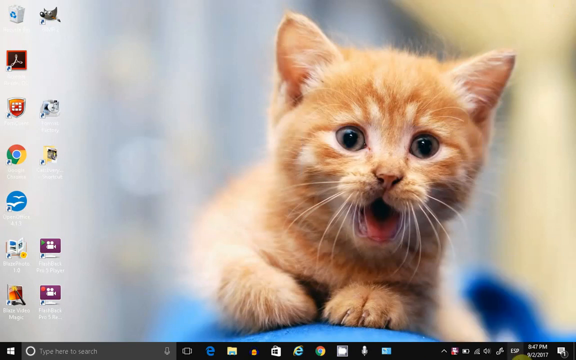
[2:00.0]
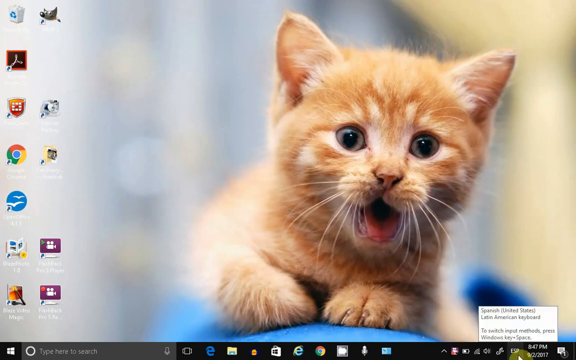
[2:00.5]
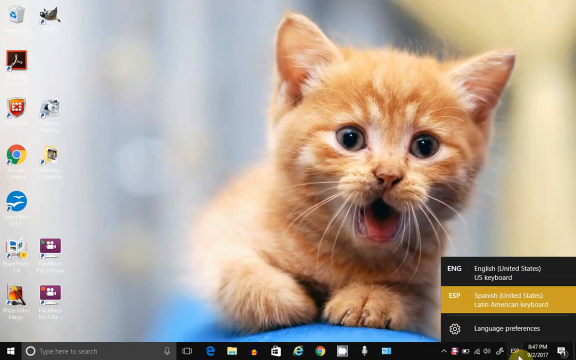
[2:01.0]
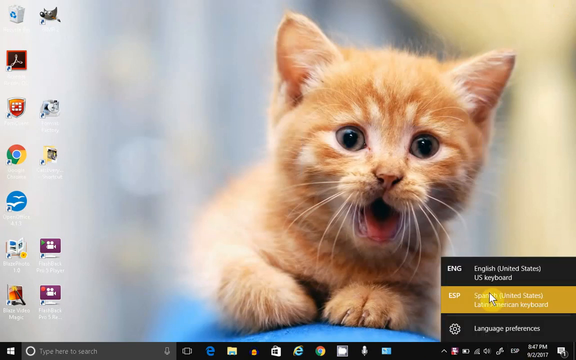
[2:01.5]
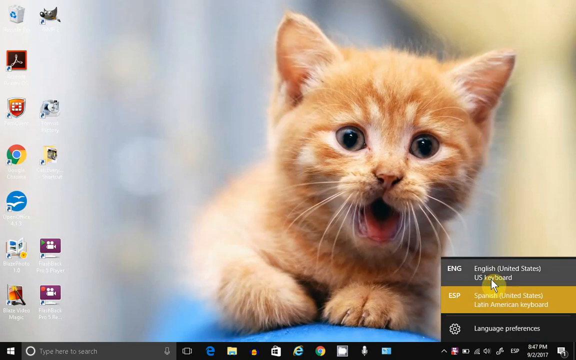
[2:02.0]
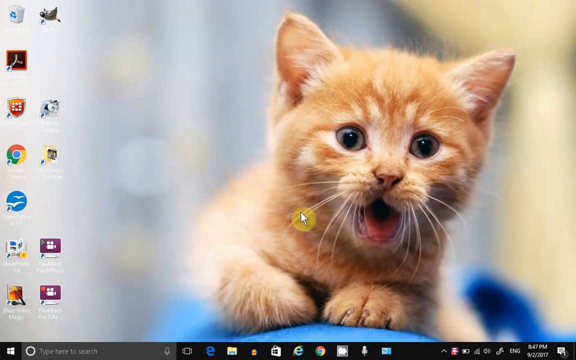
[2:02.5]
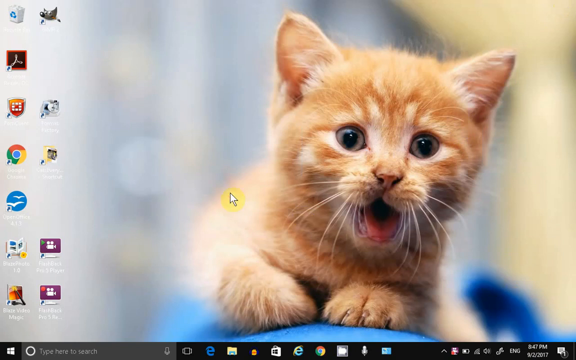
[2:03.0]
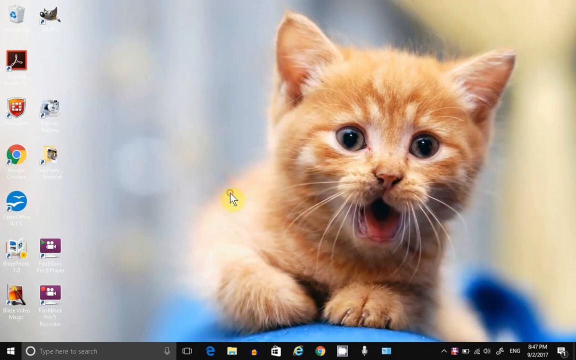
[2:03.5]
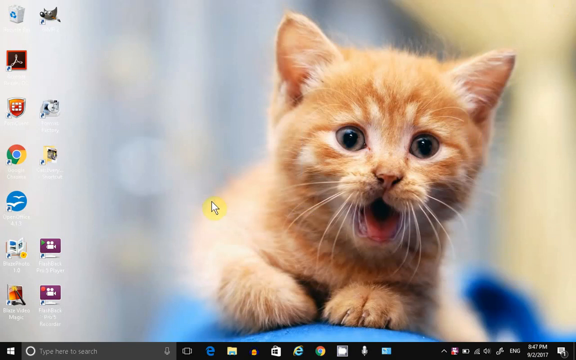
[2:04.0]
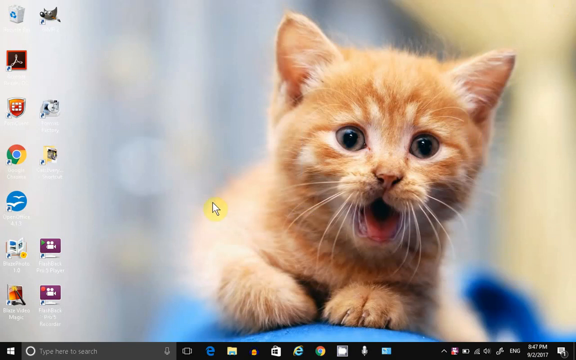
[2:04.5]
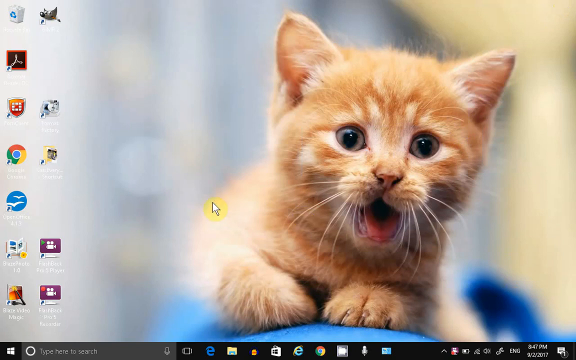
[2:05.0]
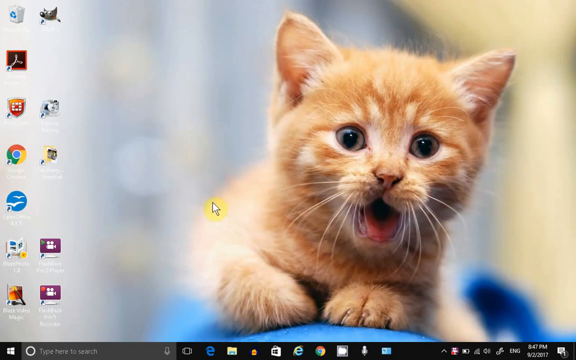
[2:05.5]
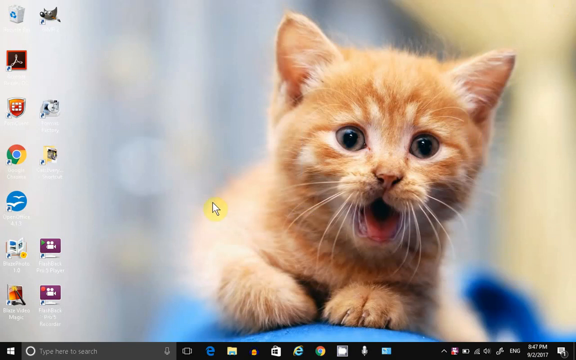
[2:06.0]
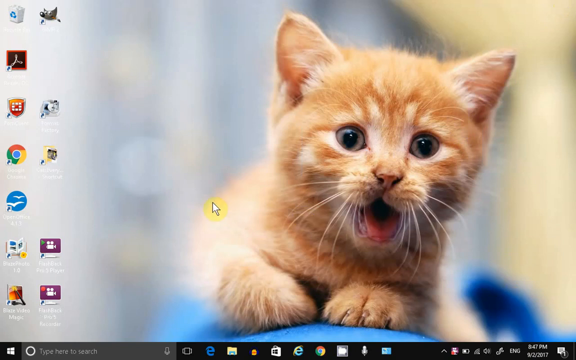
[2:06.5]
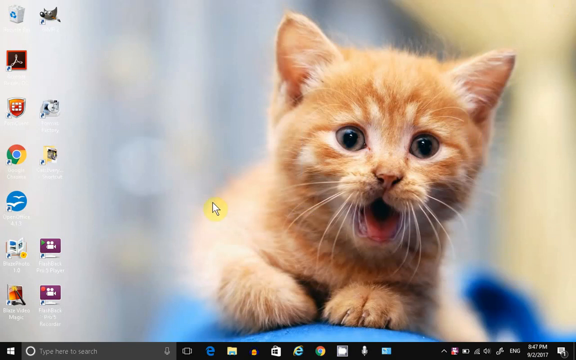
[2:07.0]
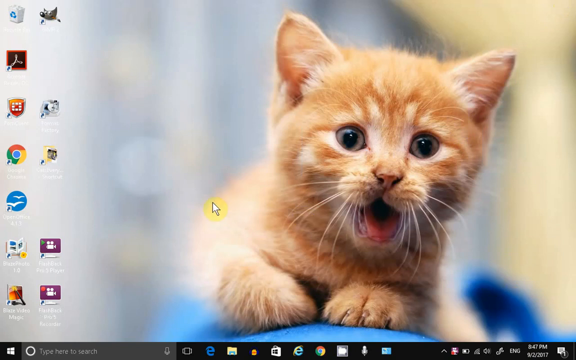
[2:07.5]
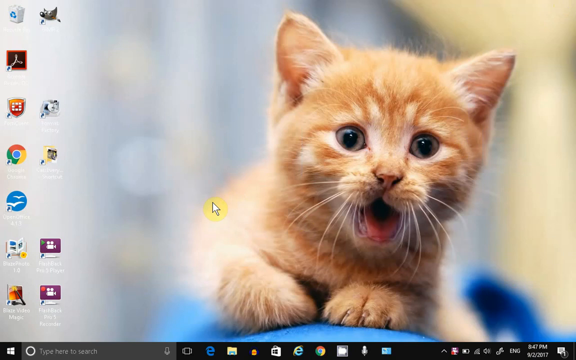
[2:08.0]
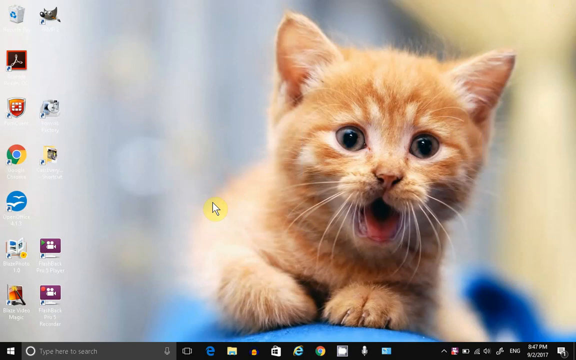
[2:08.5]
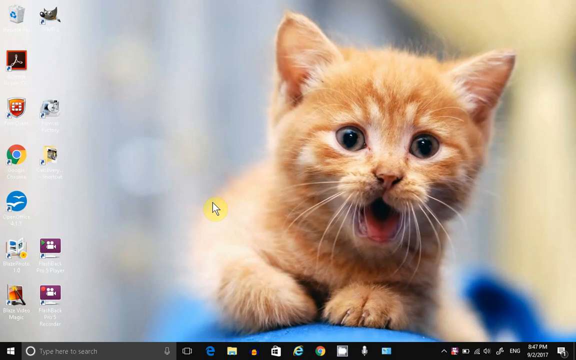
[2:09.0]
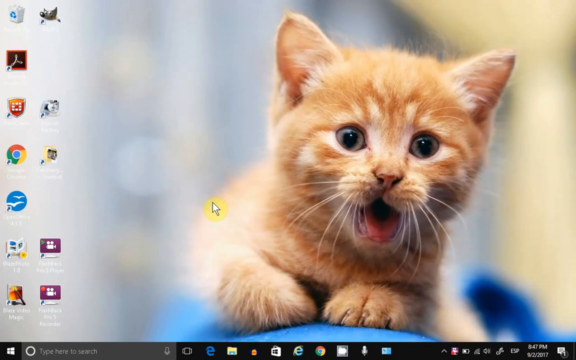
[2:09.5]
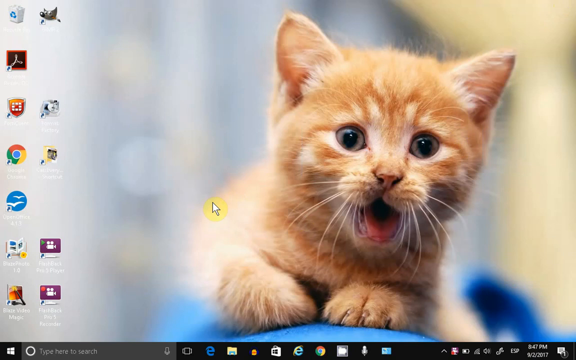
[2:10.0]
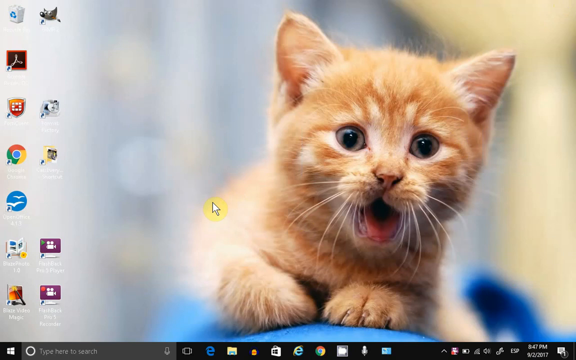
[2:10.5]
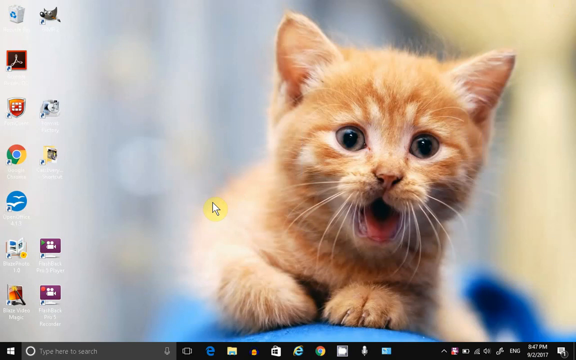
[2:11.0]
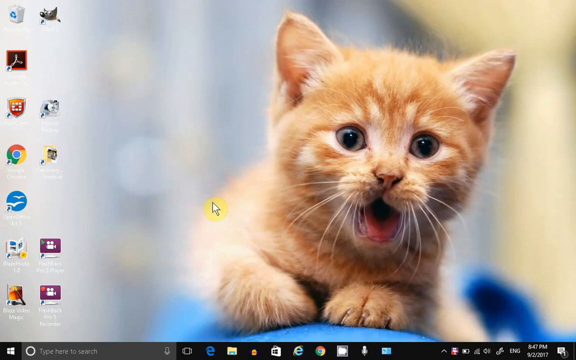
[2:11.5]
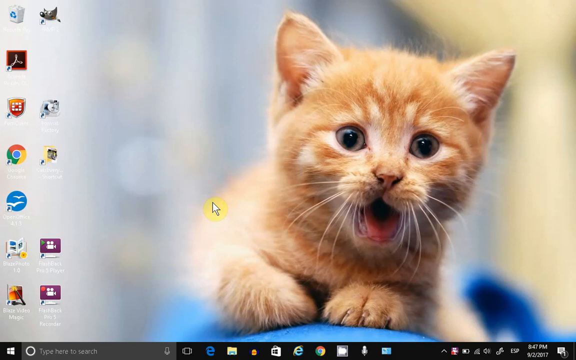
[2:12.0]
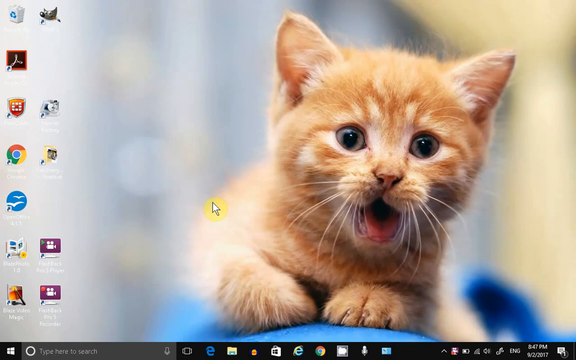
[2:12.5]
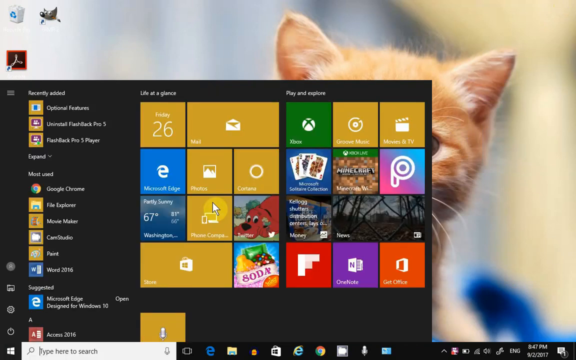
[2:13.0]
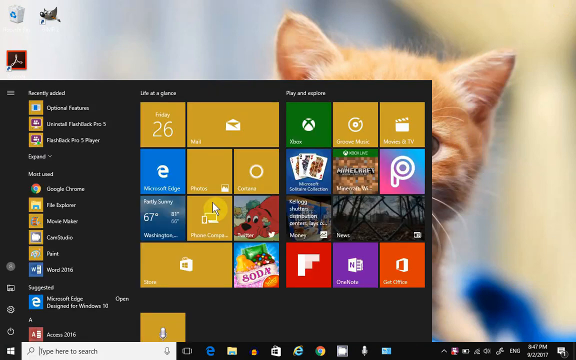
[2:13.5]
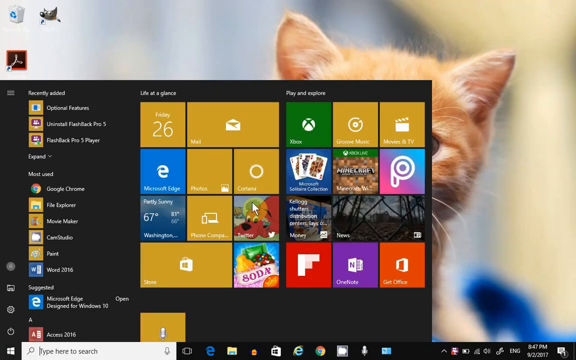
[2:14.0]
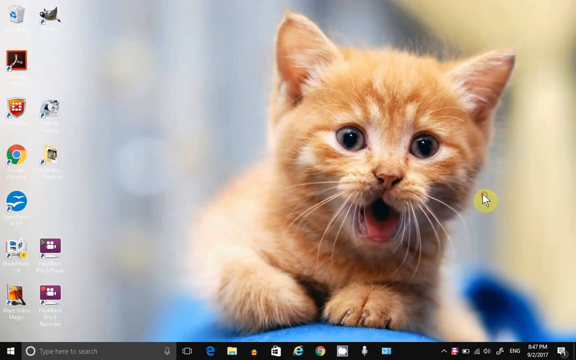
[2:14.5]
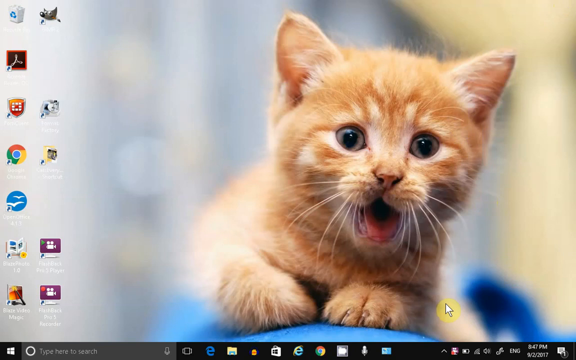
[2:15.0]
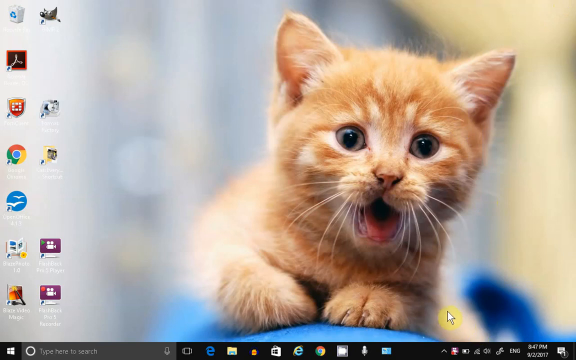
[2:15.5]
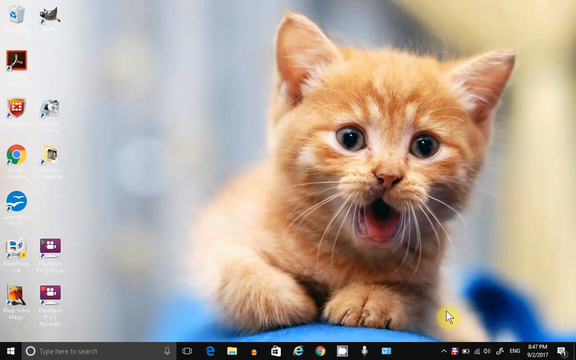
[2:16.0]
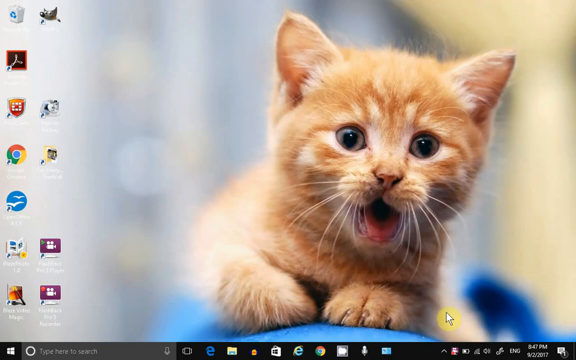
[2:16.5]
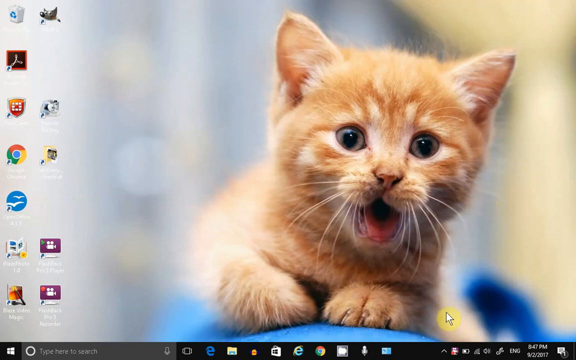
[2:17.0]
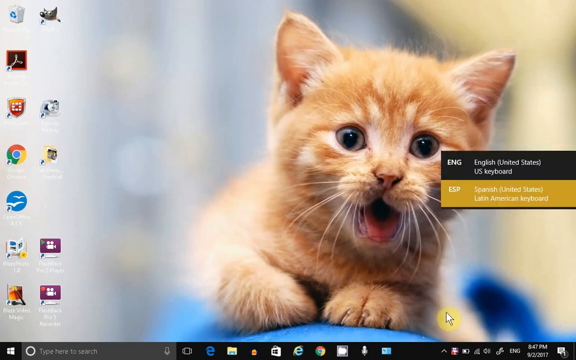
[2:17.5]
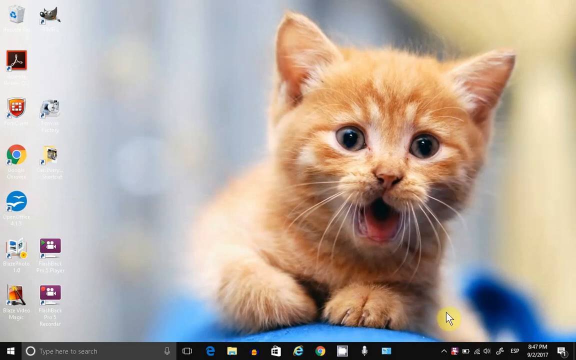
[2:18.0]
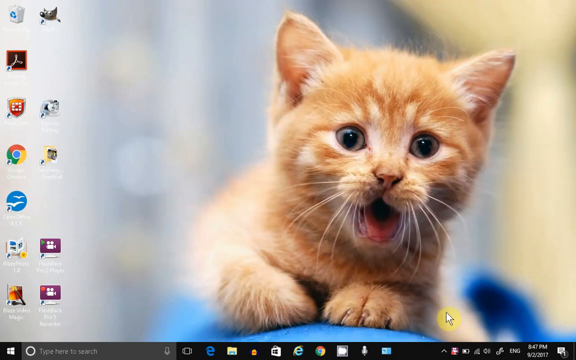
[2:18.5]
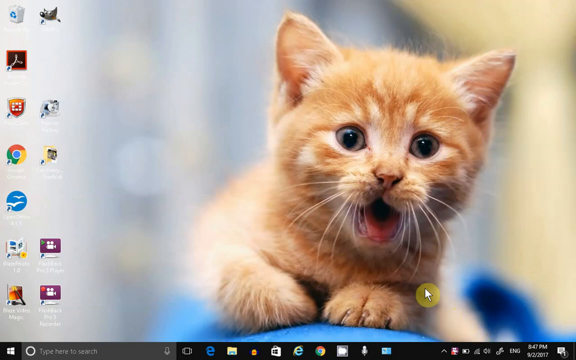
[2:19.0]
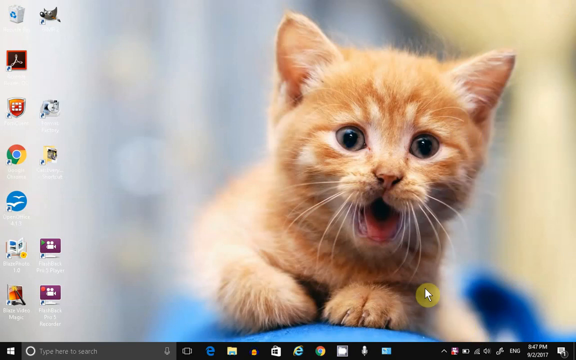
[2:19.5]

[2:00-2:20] A screensaver shows a red tabby cat leaning up, with its front paws visible. Its eyes are greenish, its mouth is open as if meowing, and its ears are pink inside. An M on its forehead marks it as a tabby. A cursor surrounded by yellow hovers in the middle of the screen. A brief, very colorful pop-up appears, with squares of different colors. The cursor appears all around the cat, at its top and side. A pop-up regarding a language appears in the lower right-hand corner, with the word "English" at the top. The cursor then hovers in the middle of the page near the cat, on its left side.